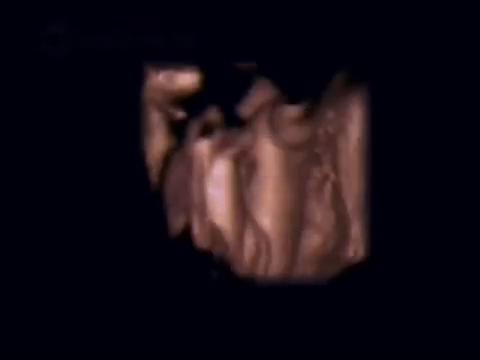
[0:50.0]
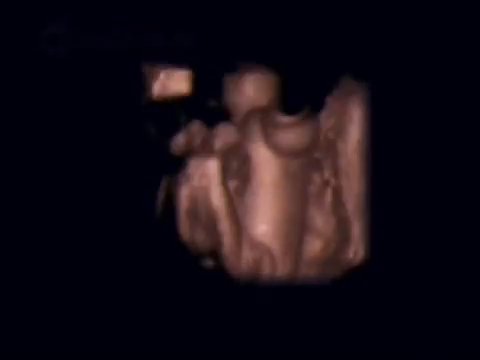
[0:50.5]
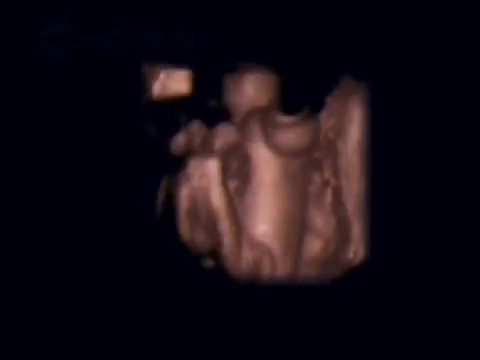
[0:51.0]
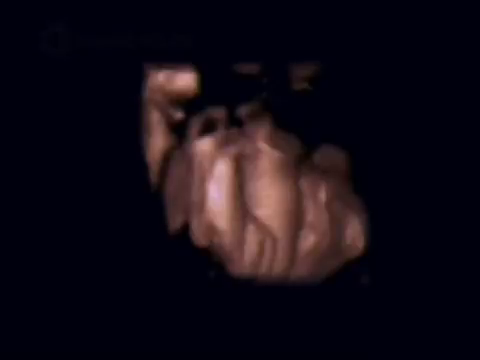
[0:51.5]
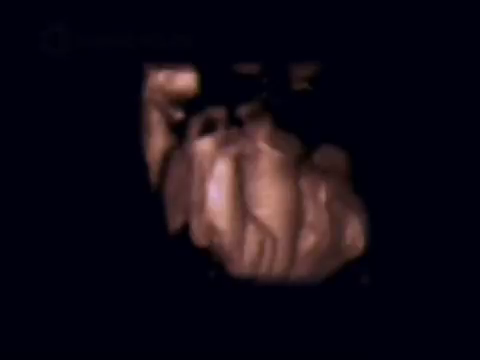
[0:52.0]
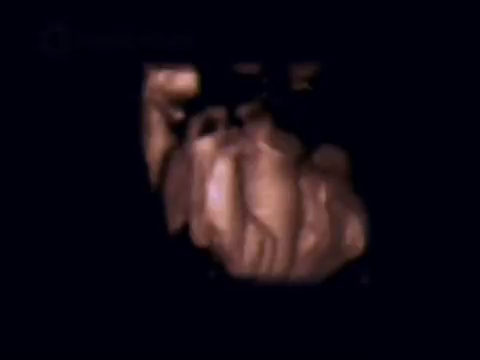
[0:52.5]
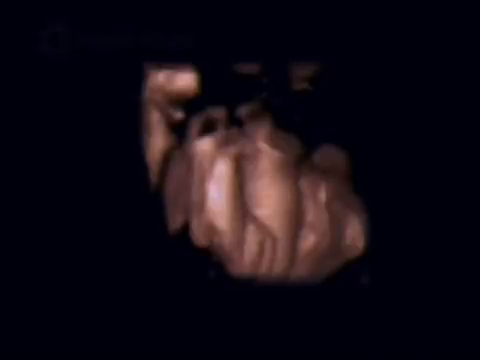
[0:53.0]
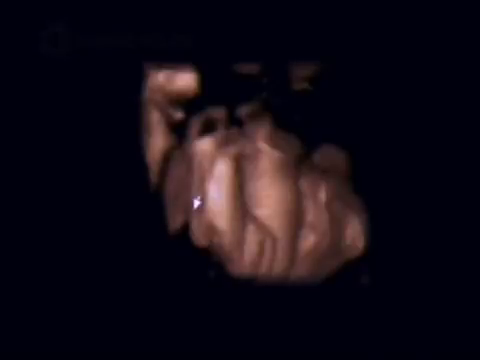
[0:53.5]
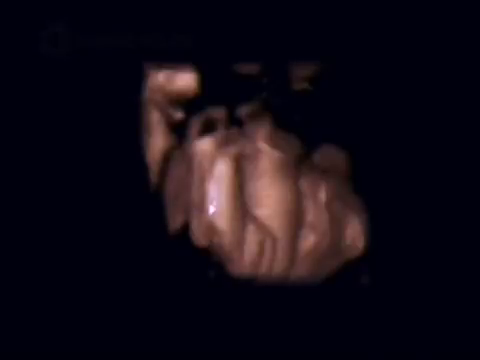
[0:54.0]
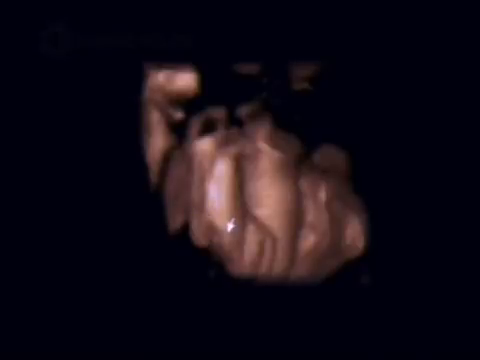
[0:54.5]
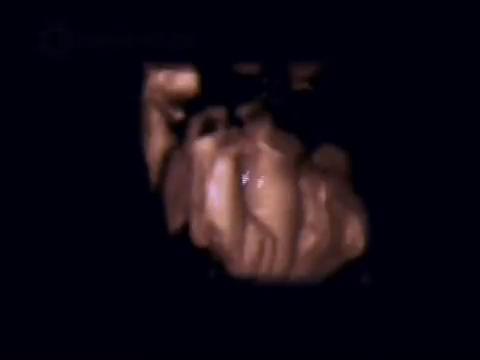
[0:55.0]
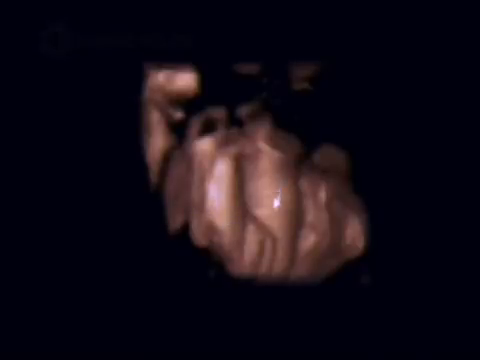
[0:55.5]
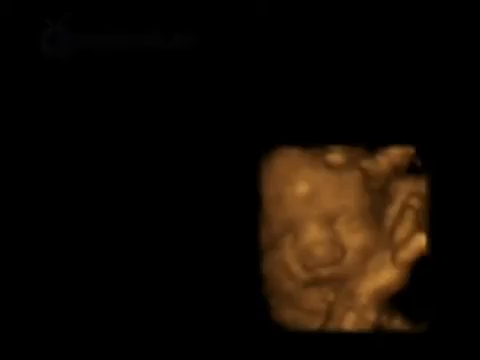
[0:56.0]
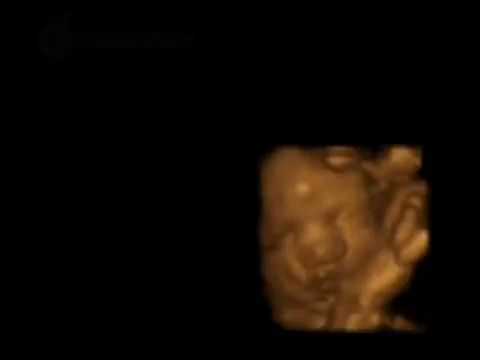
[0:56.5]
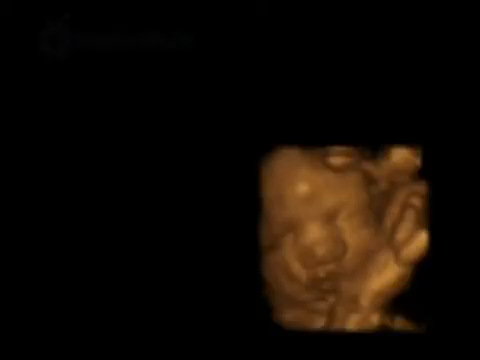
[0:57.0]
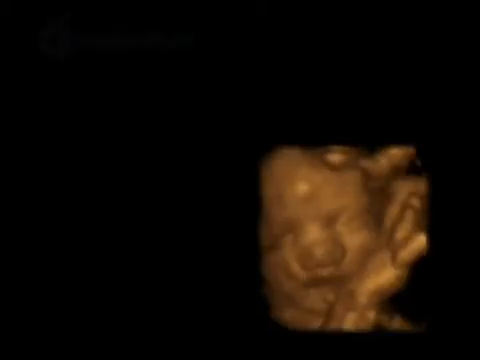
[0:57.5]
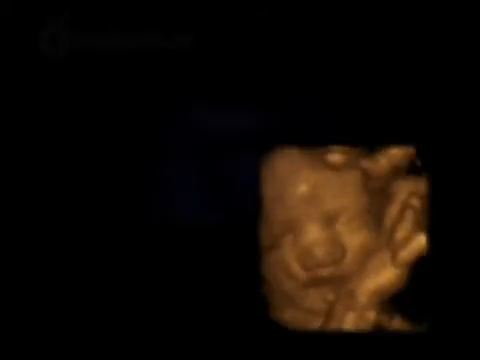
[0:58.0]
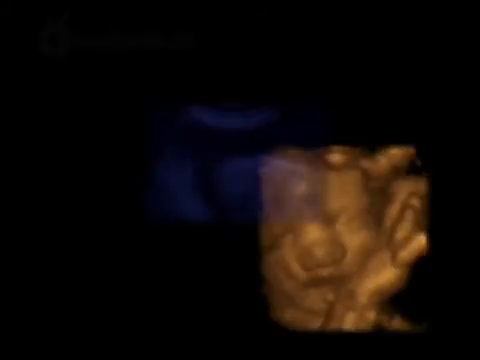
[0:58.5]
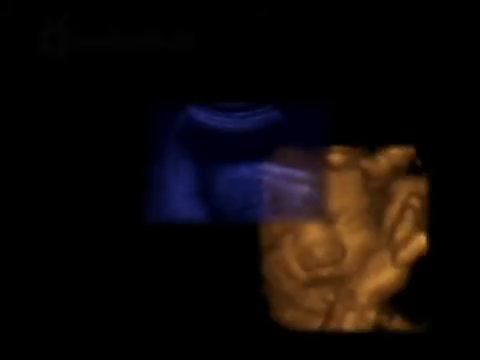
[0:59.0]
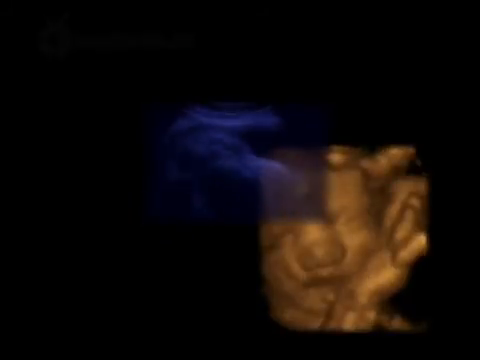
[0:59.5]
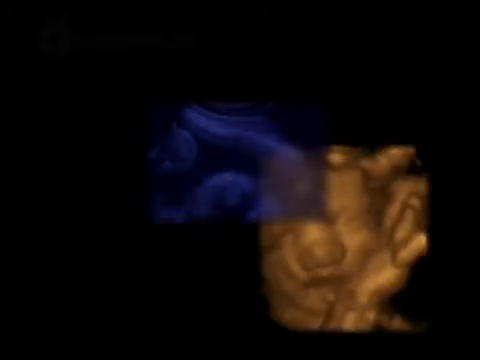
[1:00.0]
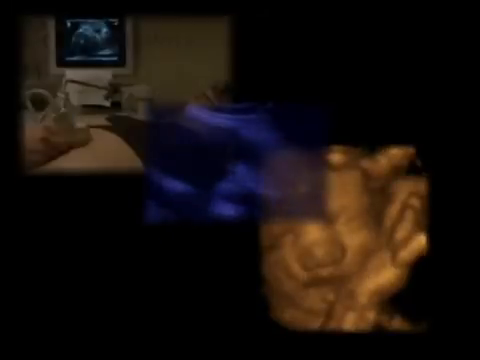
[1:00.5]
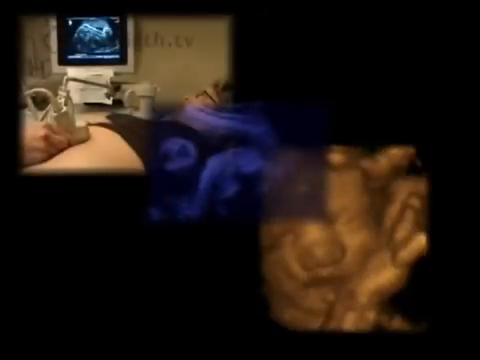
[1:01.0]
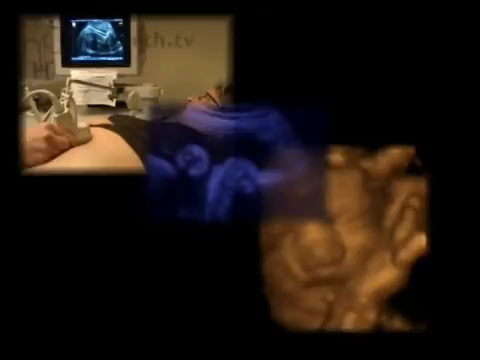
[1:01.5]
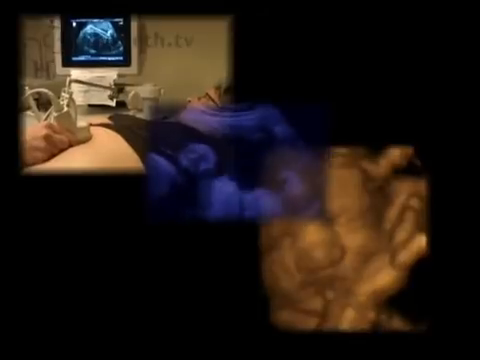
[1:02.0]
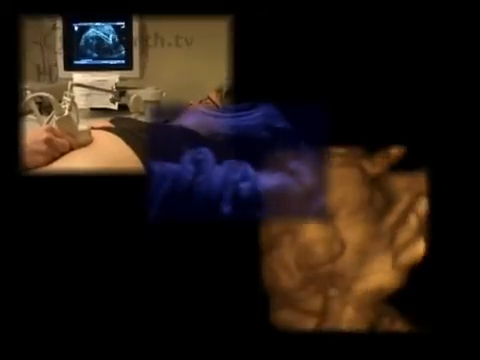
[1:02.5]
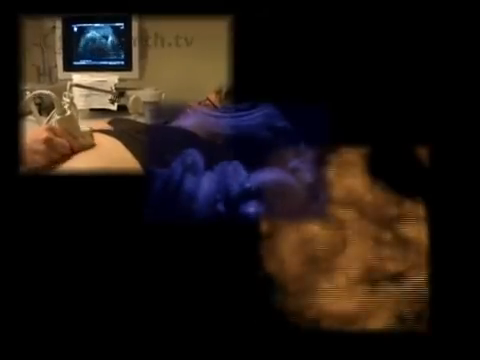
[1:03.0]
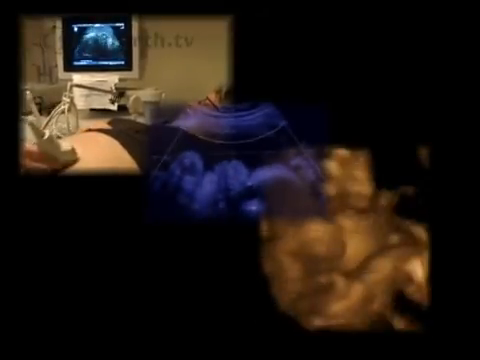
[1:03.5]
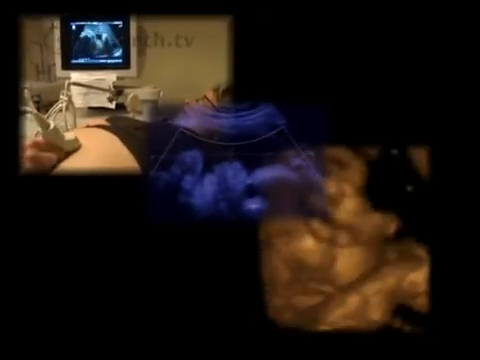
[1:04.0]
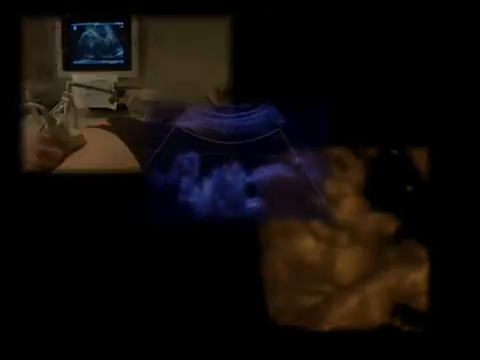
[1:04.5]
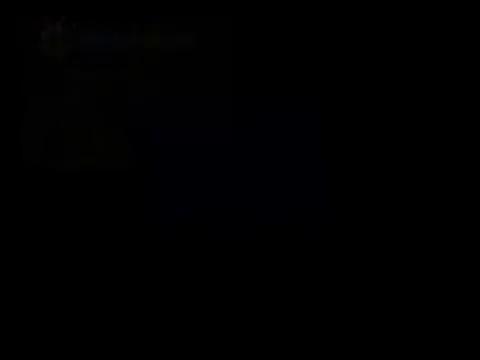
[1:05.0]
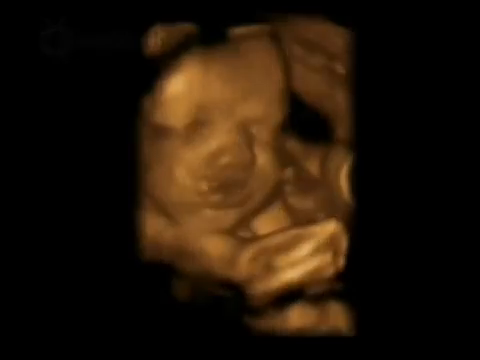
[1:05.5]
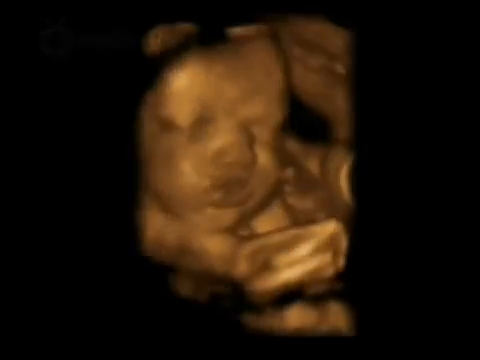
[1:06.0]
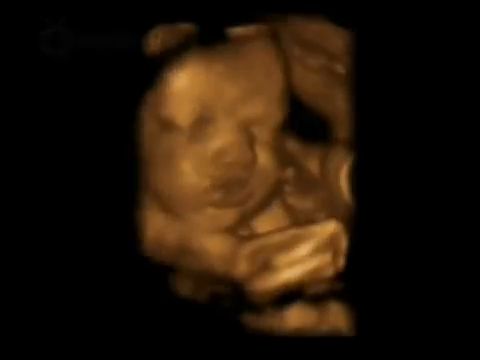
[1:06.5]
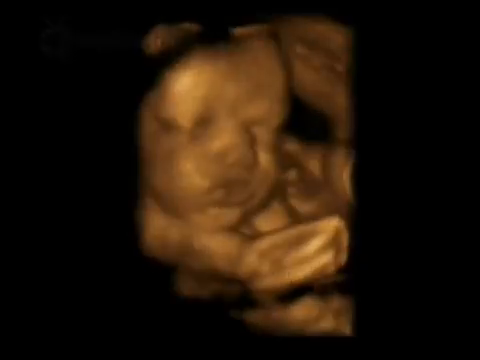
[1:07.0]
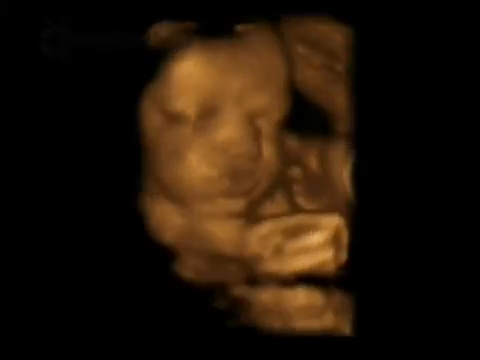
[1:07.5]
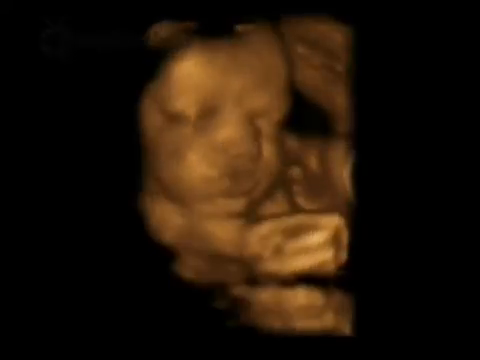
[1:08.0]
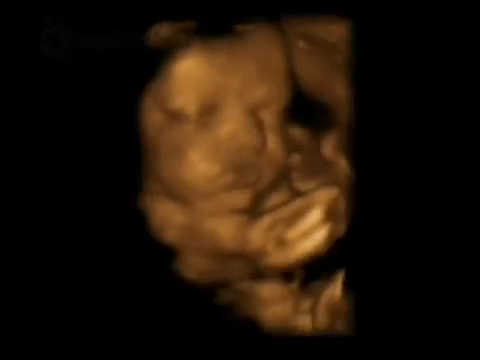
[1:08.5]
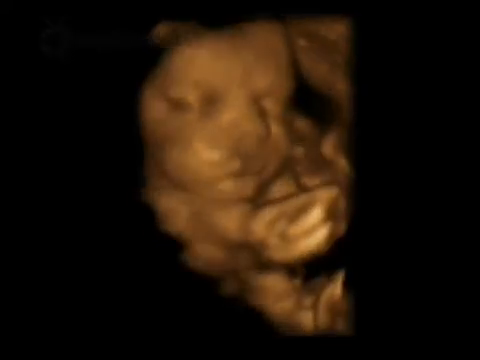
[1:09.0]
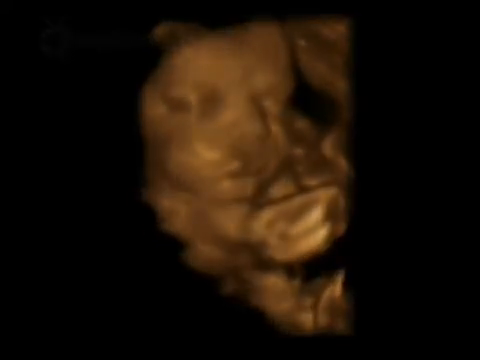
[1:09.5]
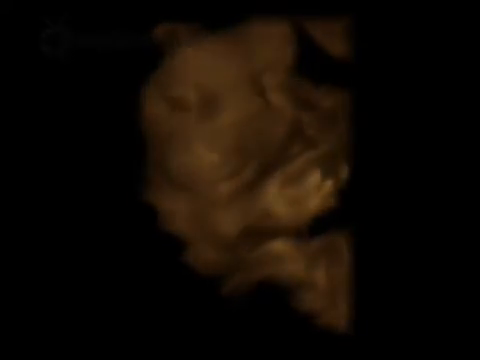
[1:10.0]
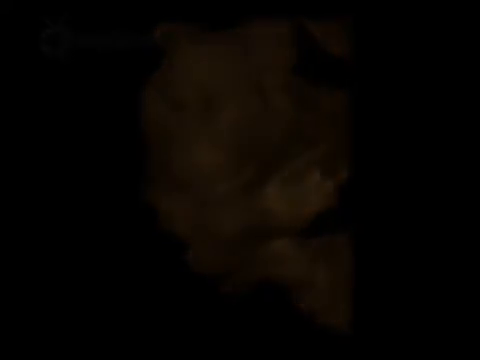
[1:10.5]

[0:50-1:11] A pink-tinted ultrasound is shown, and eventually a cursor comes over to point at different sections of it. The next shot has a yellow-tinted ultrasound in the bottom right of the video, showing mostly the baby's face and a bit of its hands coming up near its face. The middle of the screen is overlaid with a blue-tinted ultrasound, where the baby might be moving around a lot or the ultrasound machine is continuously moving to show different parts of the baby inside the uterus. The top left shows the doctor during the ultrasound live, with the screen behind them and white walls behind. The mother watches the ultrasound as she gets it done. Next, the yellow-tinted ultrasound shows the baby's face more clearly in slow motion; the baby does not seem to move much, and there are things floating around it, likely its body parts or possibly part of the mother's body.